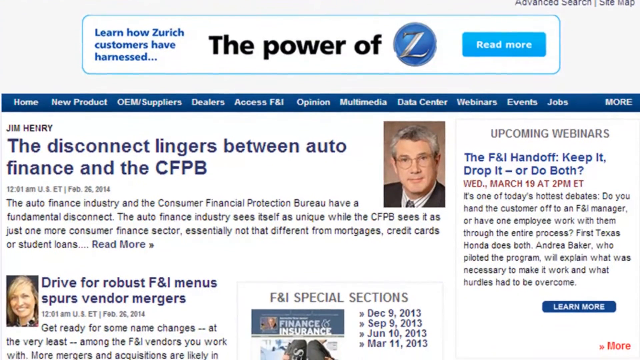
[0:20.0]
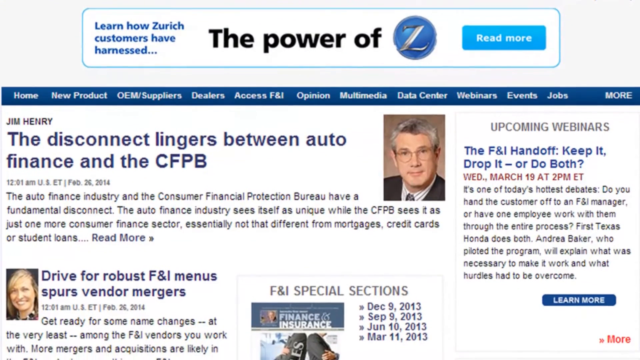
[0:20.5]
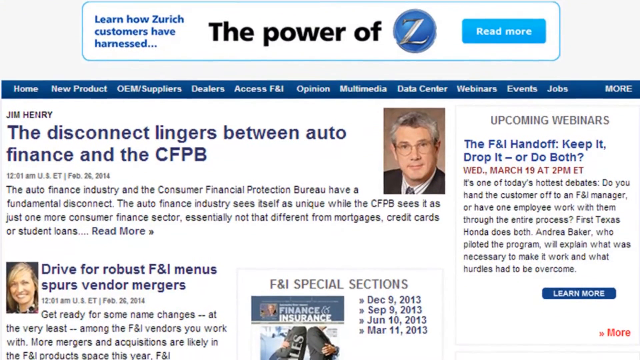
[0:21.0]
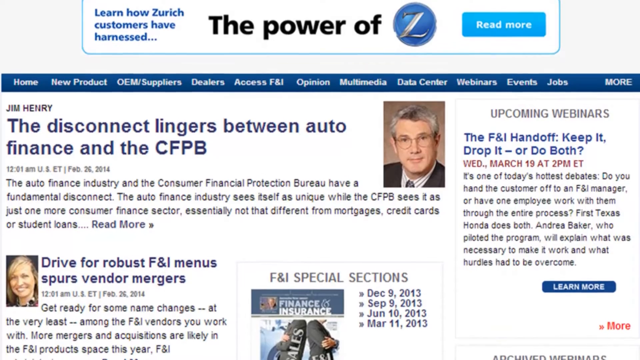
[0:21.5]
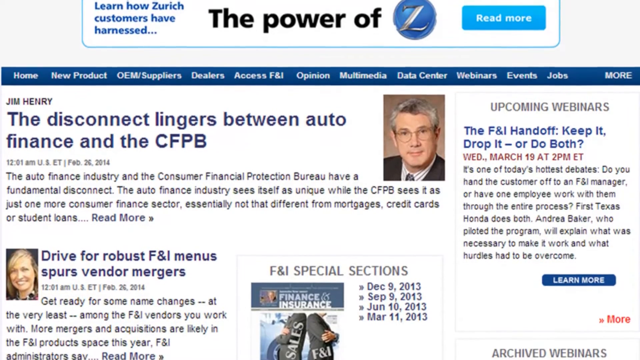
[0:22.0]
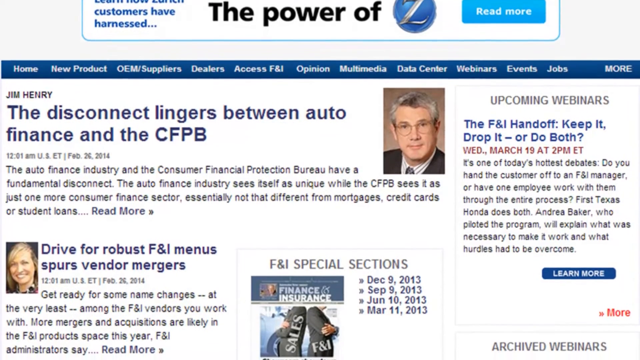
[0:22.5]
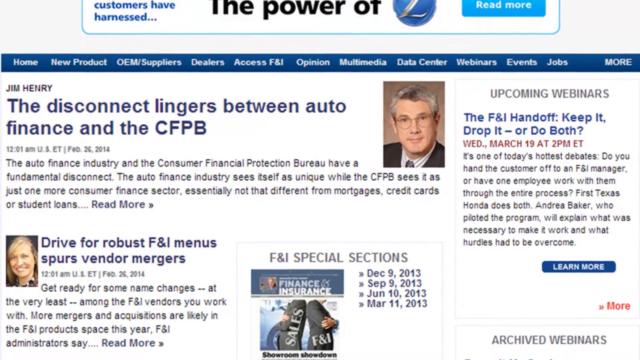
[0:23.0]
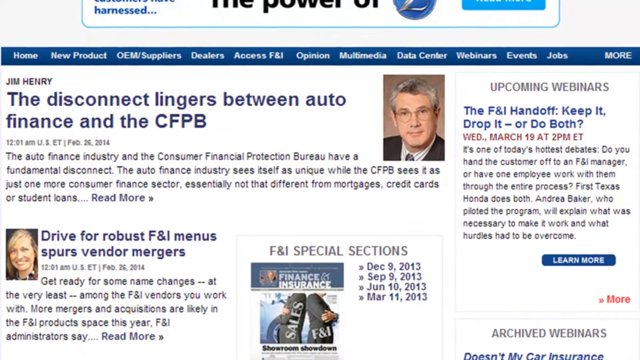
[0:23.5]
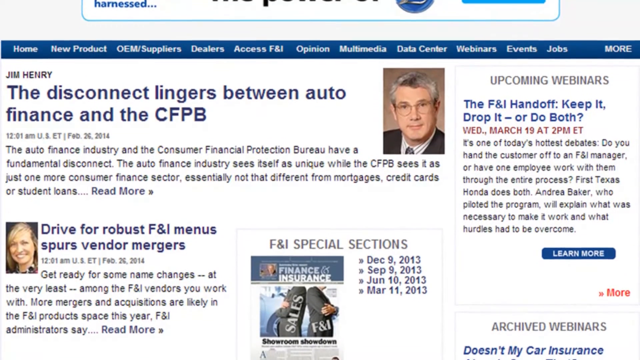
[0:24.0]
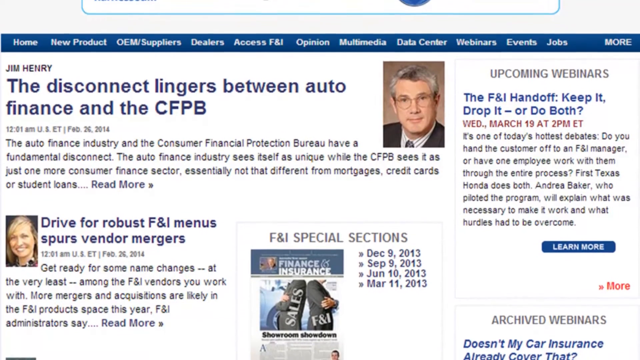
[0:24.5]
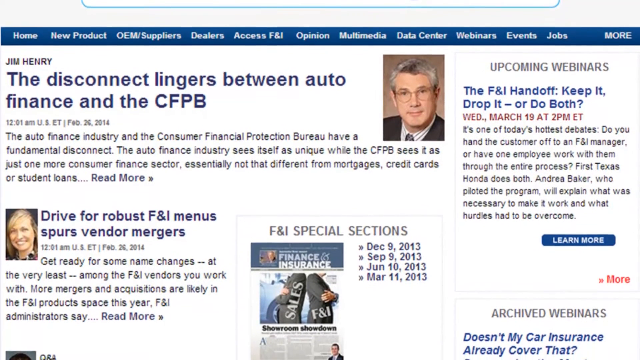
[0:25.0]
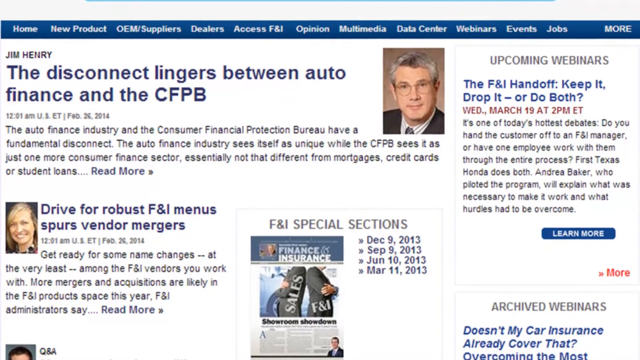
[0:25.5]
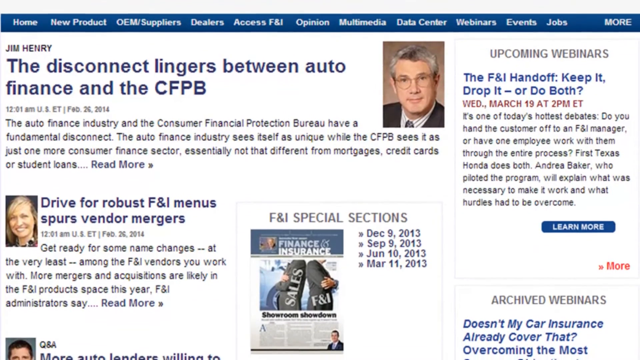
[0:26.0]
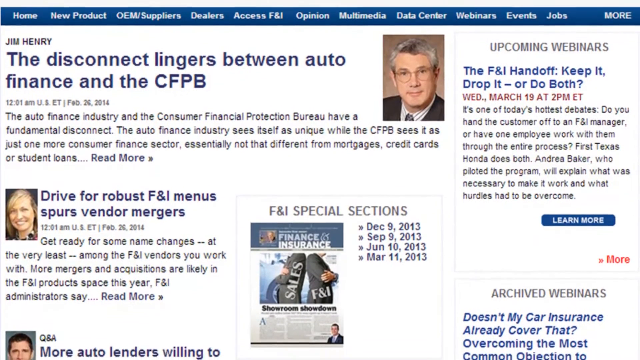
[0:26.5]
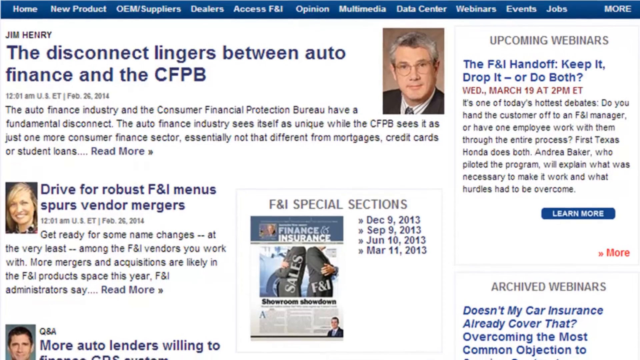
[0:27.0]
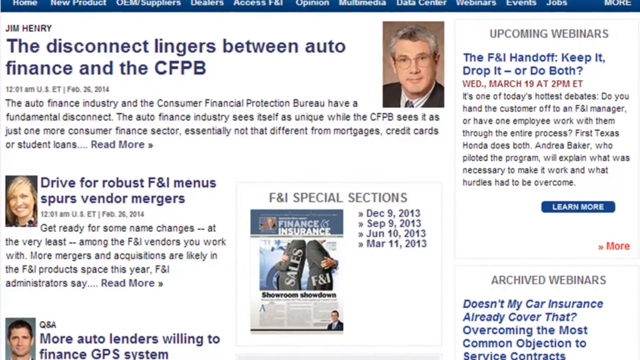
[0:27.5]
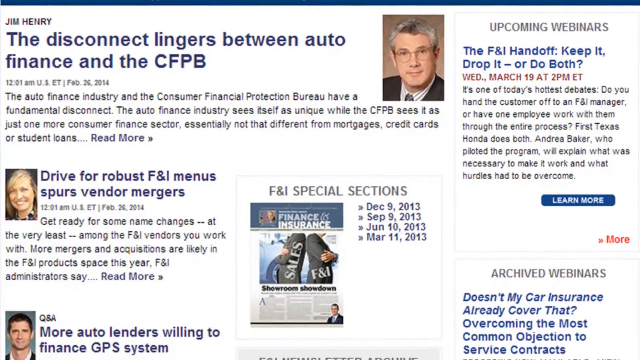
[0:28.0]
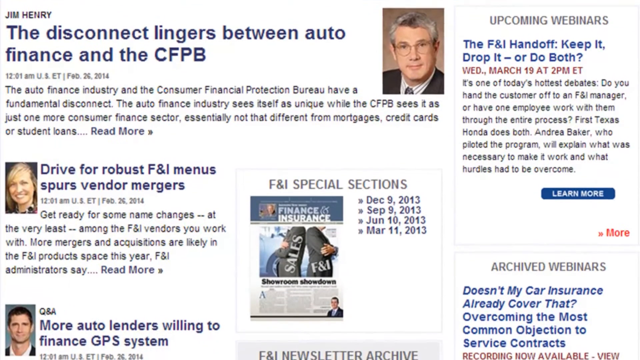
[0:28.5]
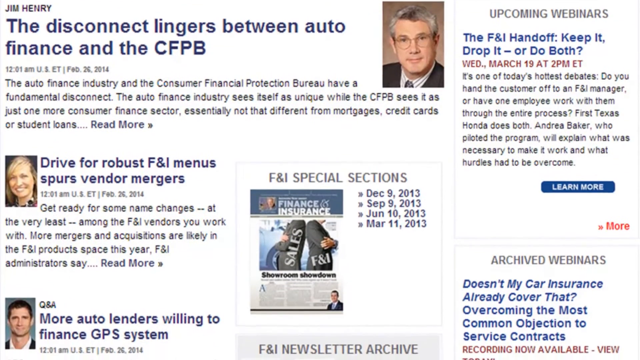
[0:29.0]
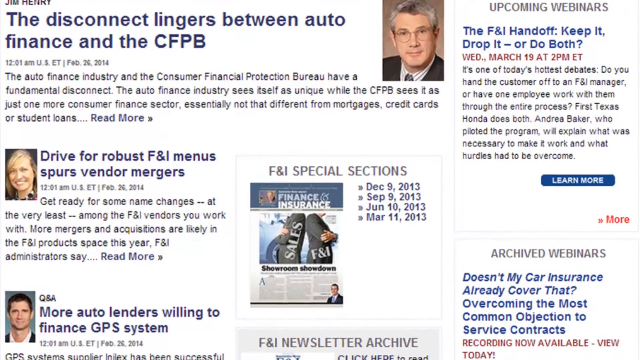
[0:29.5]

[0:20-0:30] A website shows an article or series of articles, one of which is titled "The Disconnect Lingers Between Auto Finance and the CFPB." The article is apparently authored by Jim Henry and appears to be dated February 26, 2014. An excerpt of the article is shown, followed by an ellipsis and a read more link. In a bar on the right-hand side, separate from the article listings, a header reads "upcoming webinars" above a link to a webinar titled "The F&I Handoff, keep it, drop it, or do both?"